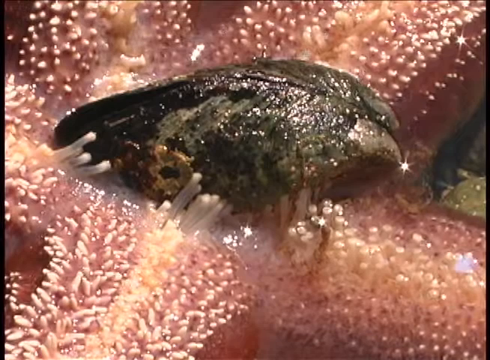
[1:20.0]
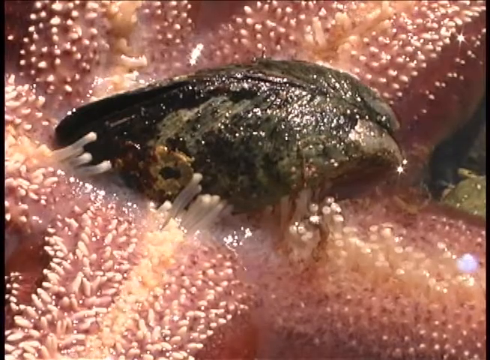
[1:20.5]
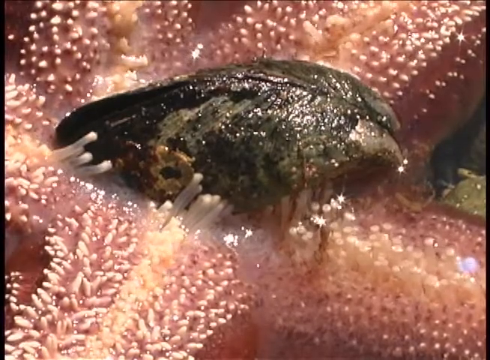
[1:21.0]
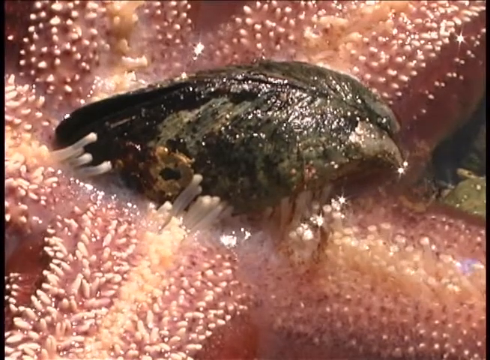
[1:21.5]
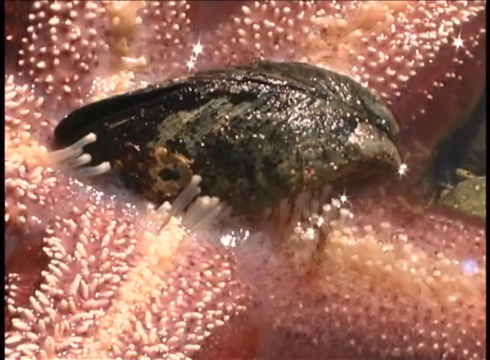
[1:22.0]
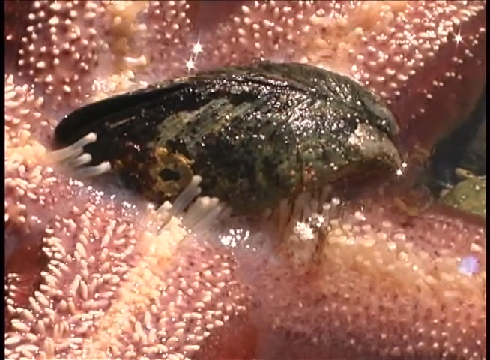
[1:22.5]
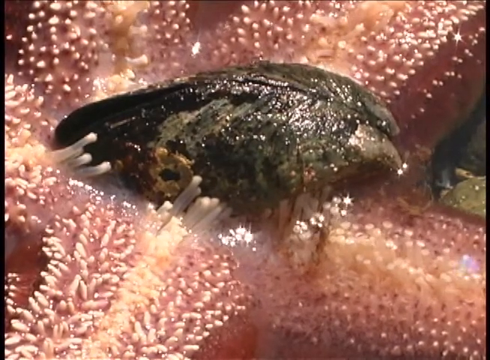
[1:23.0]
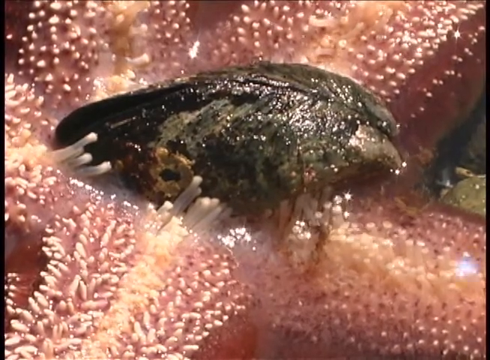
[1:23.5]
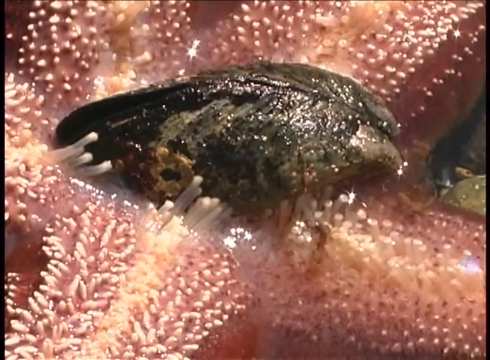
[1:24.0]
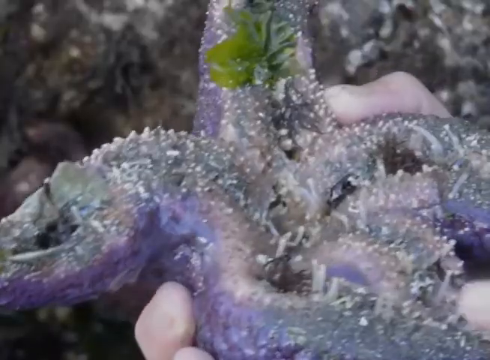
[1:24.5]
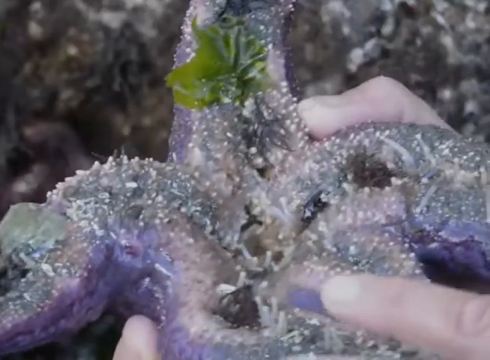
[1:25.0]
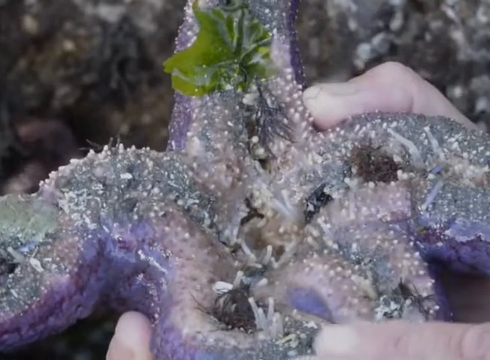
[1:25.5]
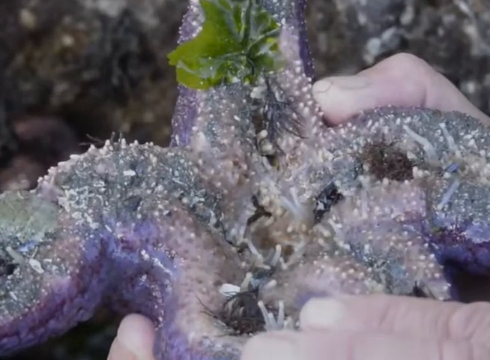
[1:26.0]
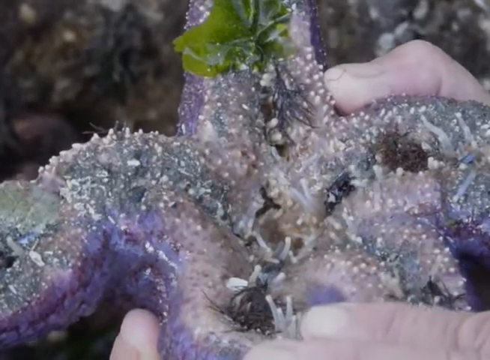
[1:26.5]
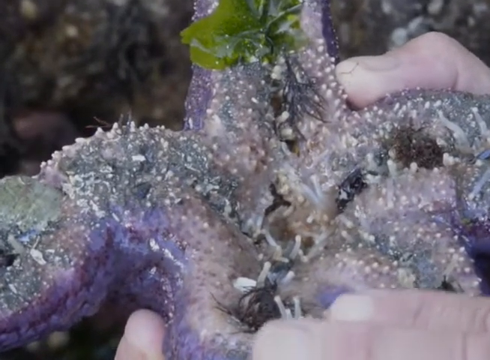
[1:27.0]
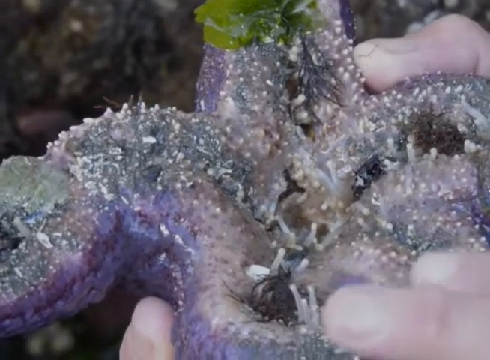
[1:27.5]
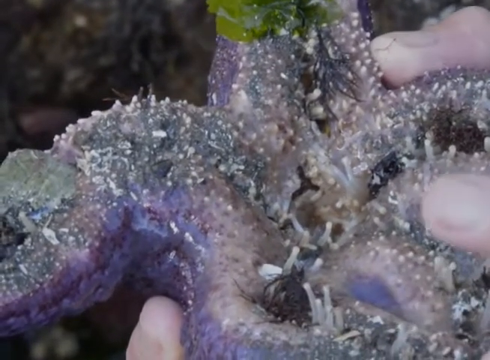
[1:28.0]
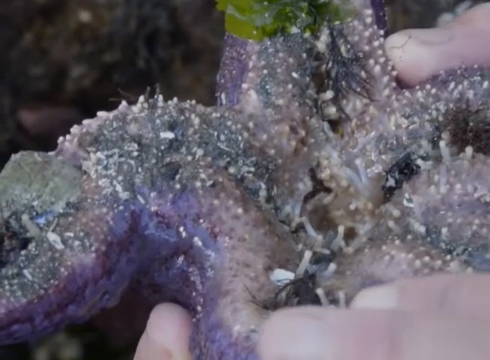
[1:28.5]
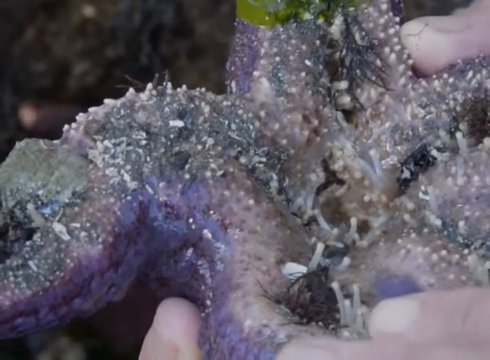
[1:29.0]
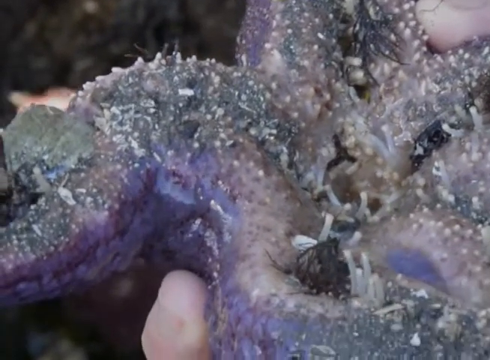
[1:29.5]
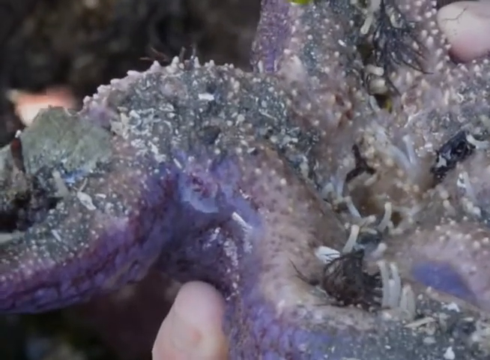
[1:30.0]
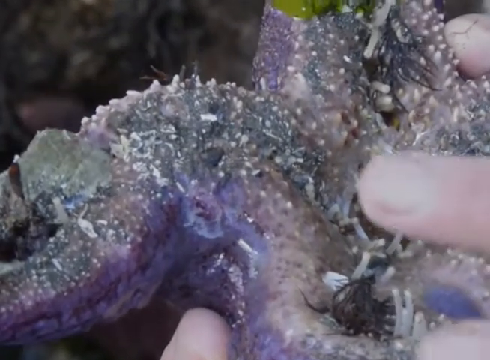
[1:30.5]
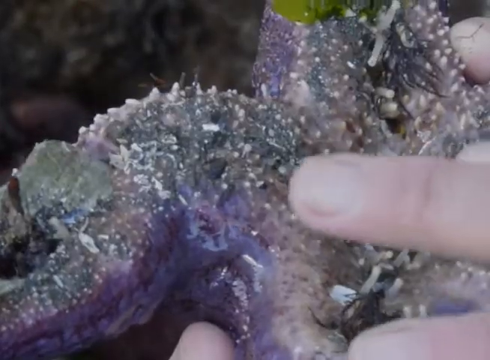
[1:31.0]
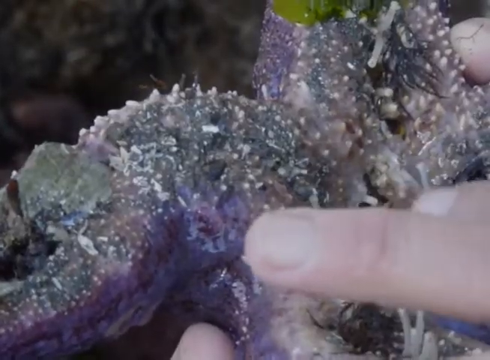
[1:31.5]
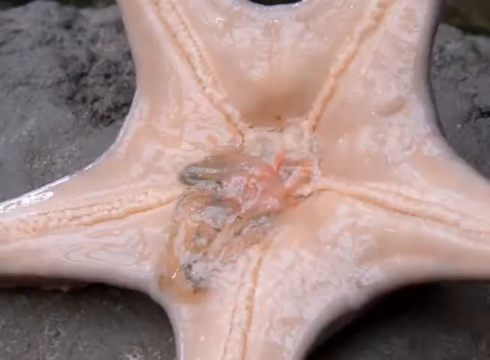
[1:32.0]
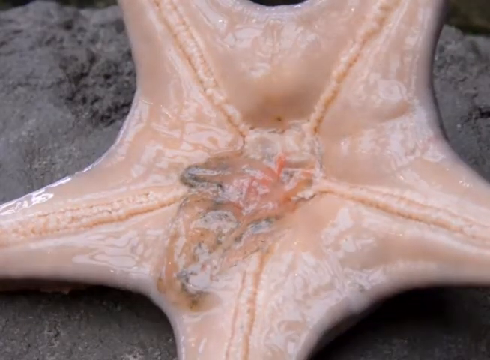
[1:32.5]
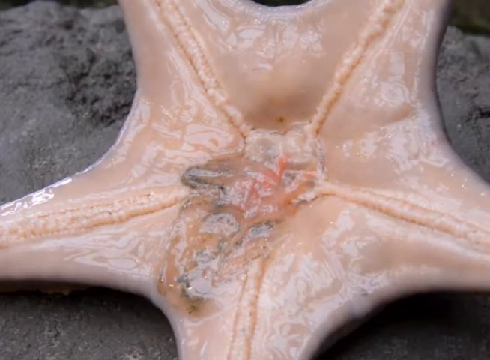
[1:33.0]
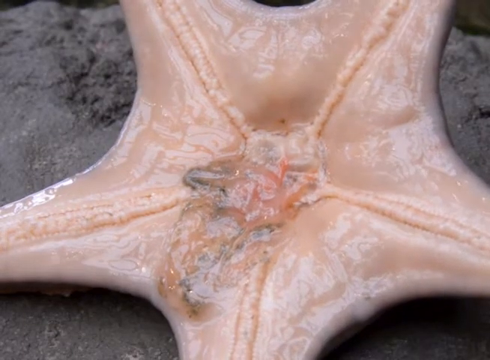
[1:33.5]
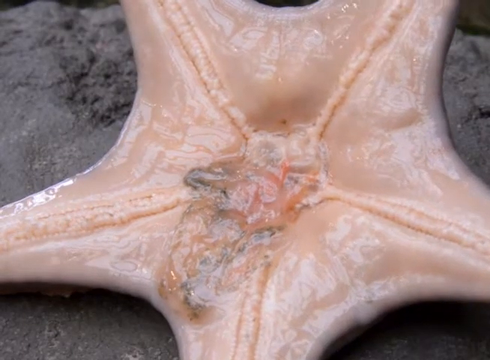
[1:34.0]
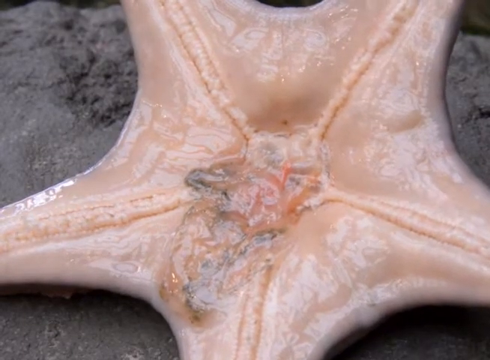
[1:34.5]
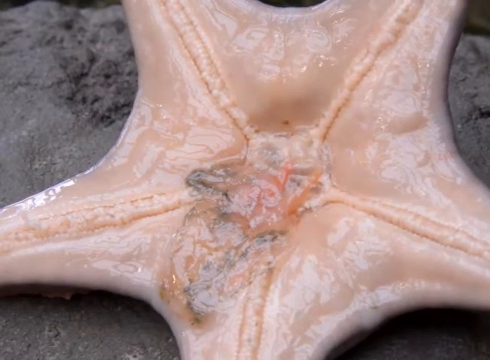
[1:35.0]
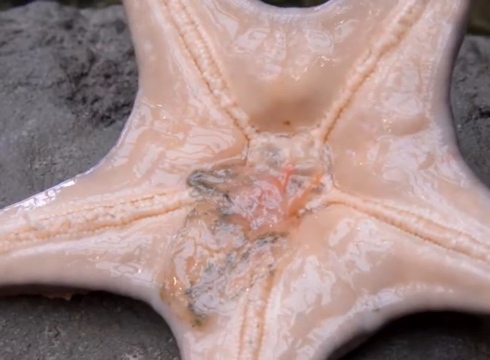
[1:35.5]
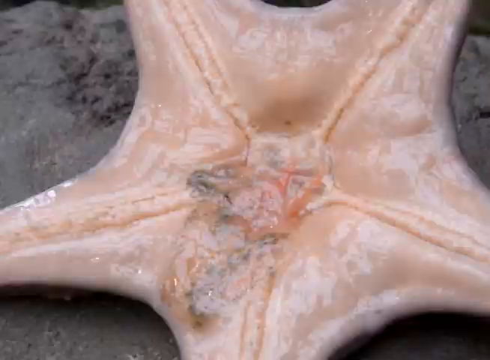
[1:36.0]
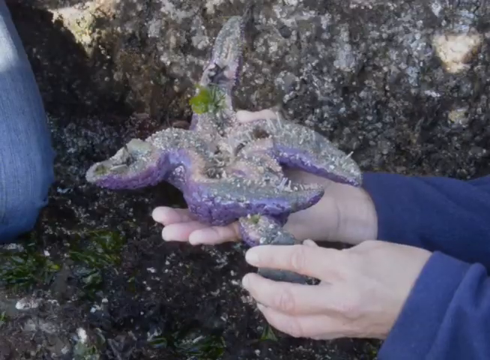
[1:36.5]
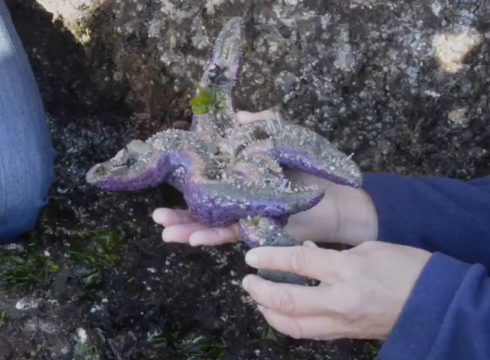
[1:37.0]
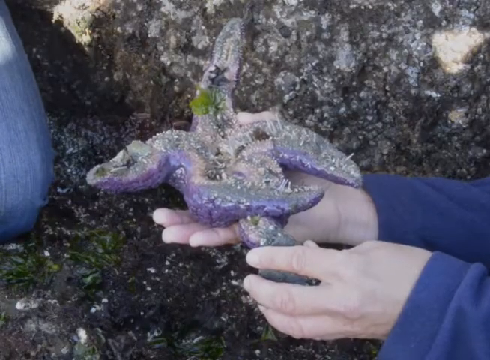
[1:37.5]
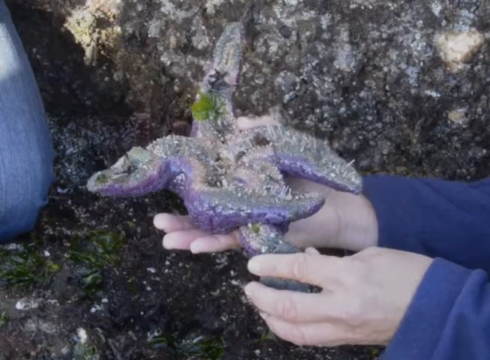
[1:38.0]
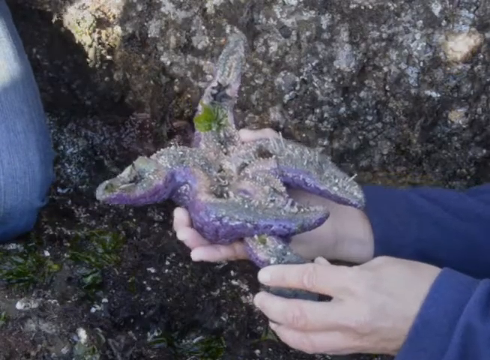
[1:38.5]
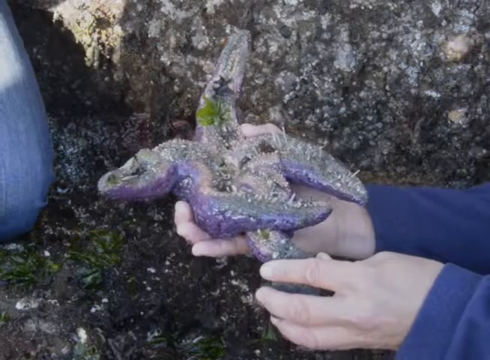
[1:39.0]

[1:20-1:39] The starfish is shown, including its bottom and what it looks like underneath. The camera pans over to another starfish, which is red, and the two people hold and explore the oysters and the snails nearby. The camera zooms in and moves closer to the creatures. The two people's hands are visible holding the creatures, which they have taken out of the water to explore them closer. The camera also pans back under the water to show more creatures.